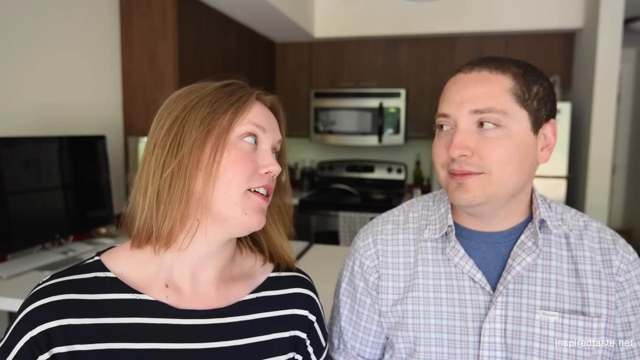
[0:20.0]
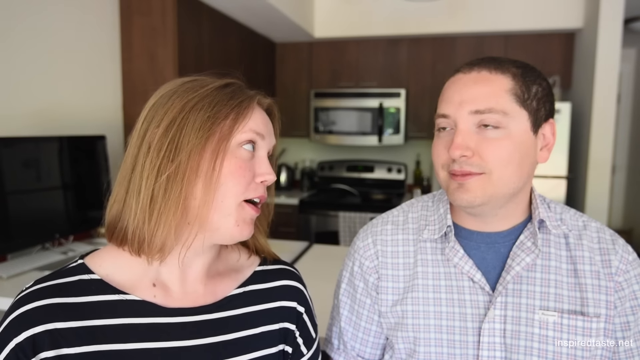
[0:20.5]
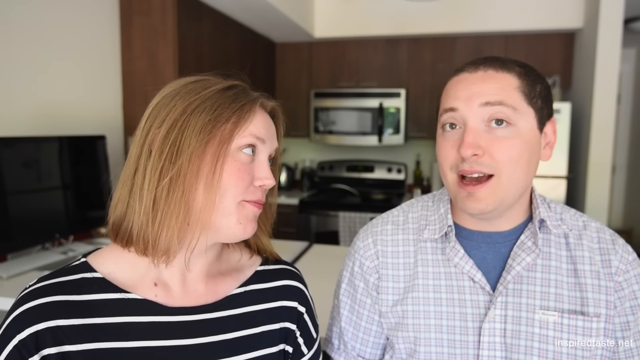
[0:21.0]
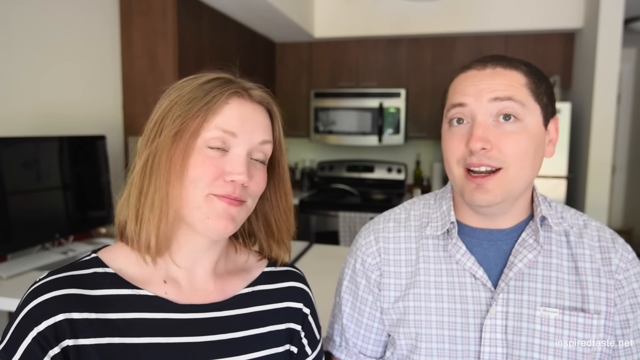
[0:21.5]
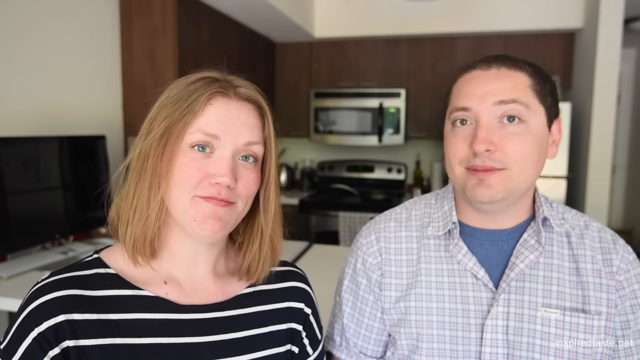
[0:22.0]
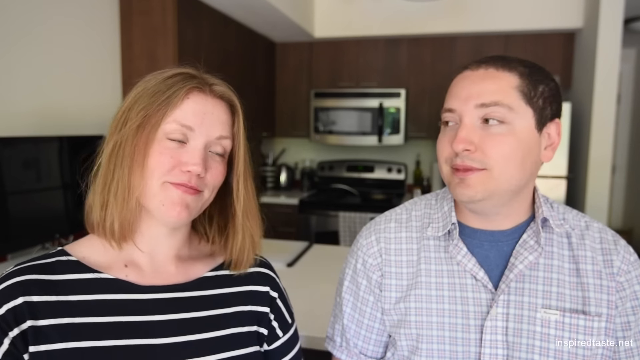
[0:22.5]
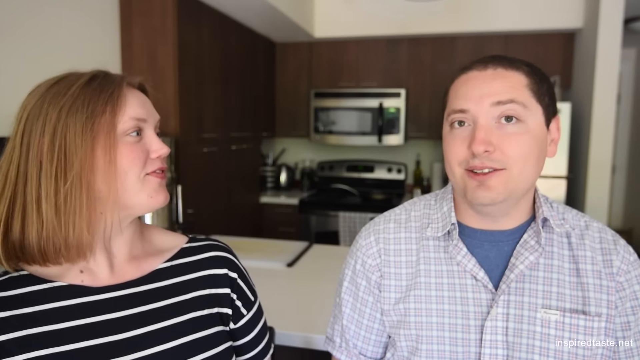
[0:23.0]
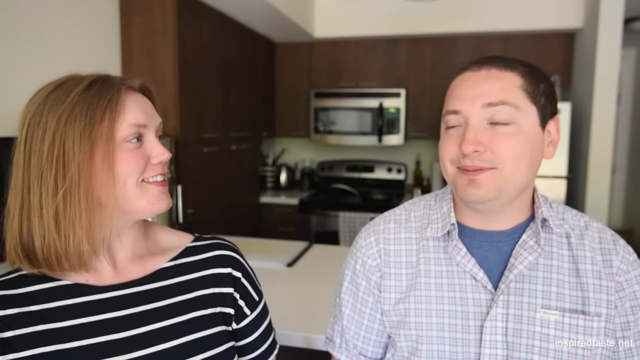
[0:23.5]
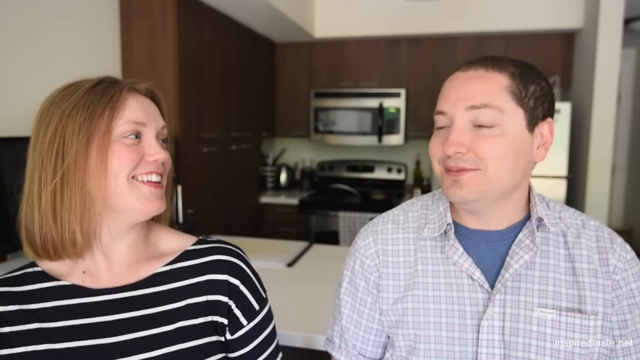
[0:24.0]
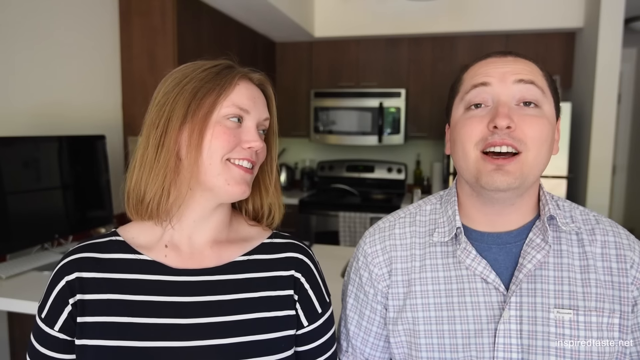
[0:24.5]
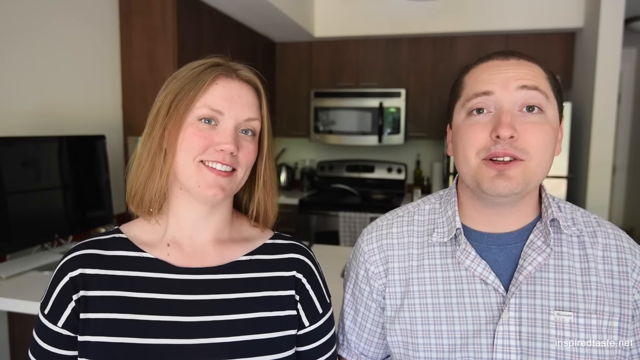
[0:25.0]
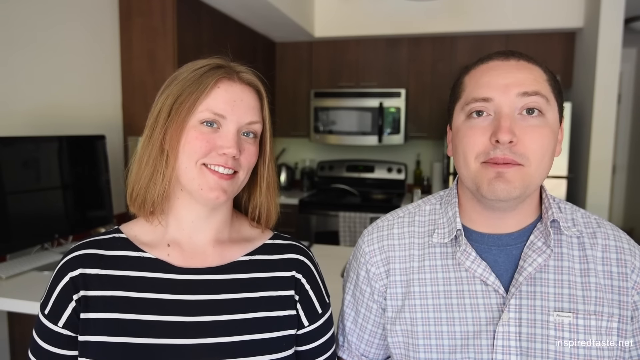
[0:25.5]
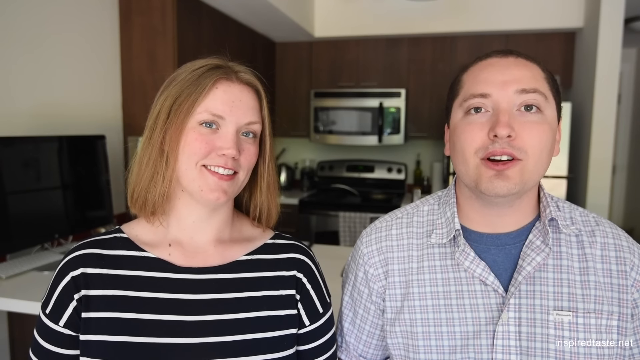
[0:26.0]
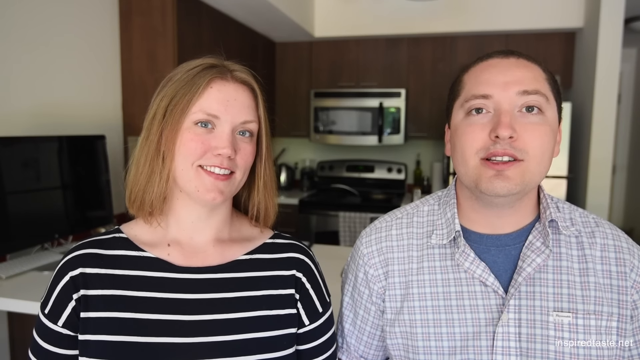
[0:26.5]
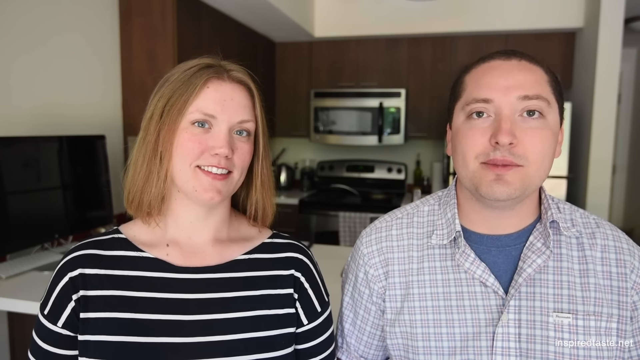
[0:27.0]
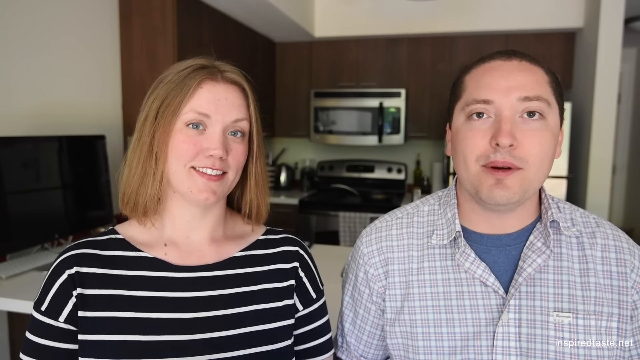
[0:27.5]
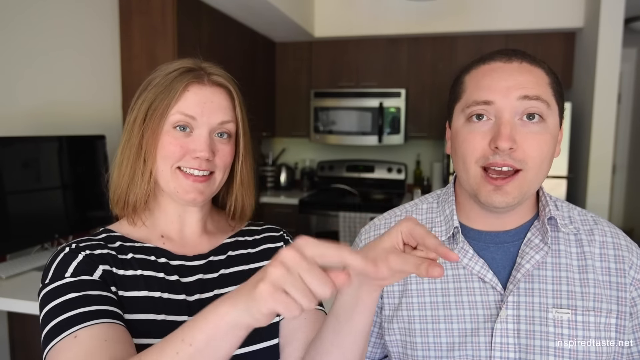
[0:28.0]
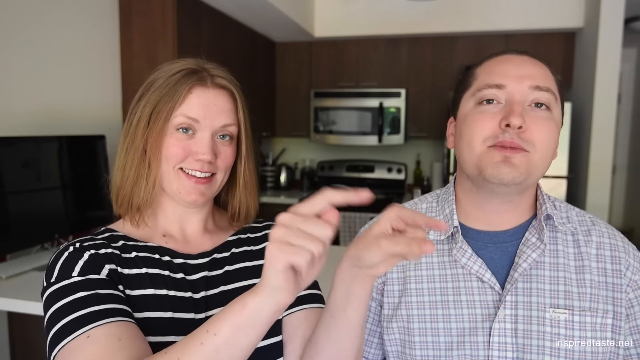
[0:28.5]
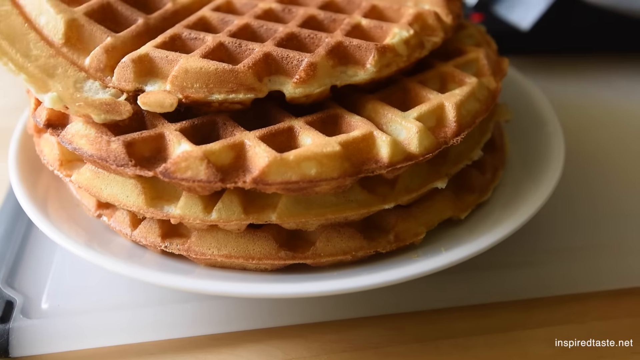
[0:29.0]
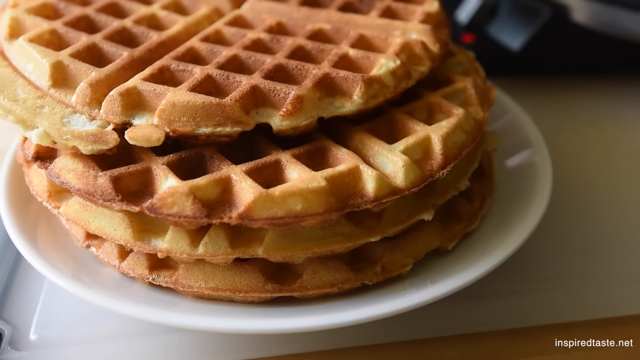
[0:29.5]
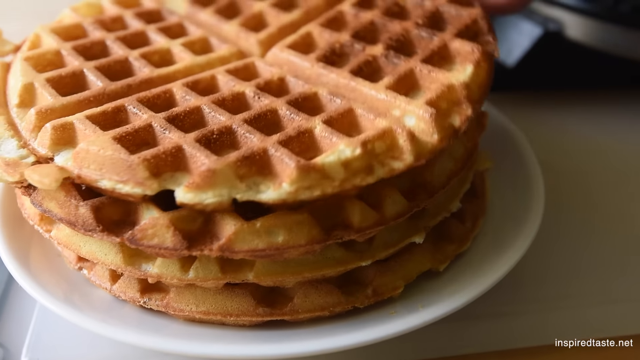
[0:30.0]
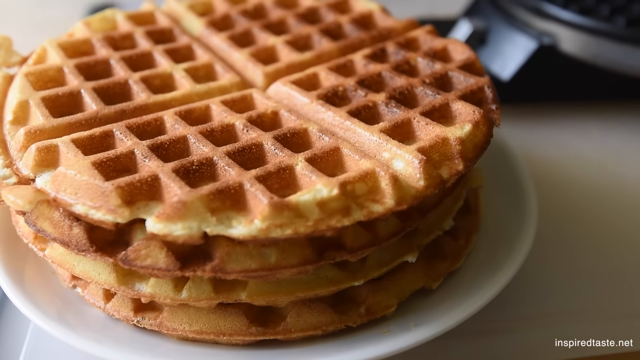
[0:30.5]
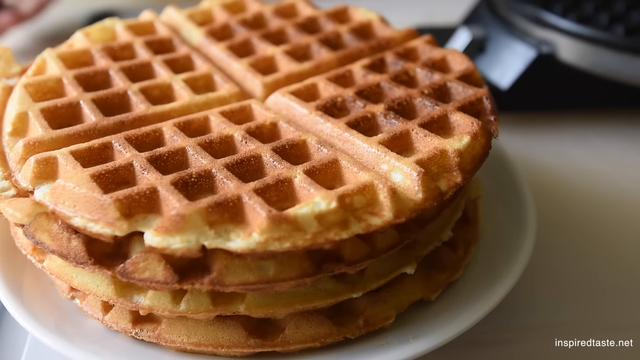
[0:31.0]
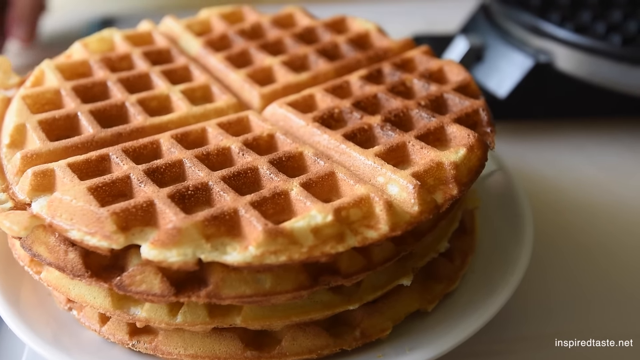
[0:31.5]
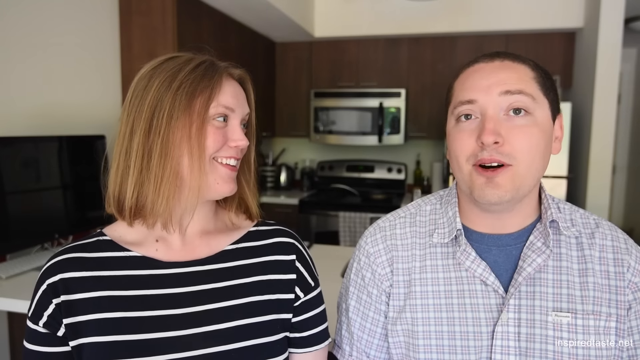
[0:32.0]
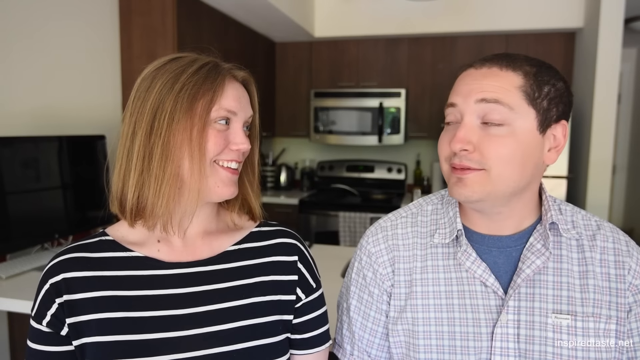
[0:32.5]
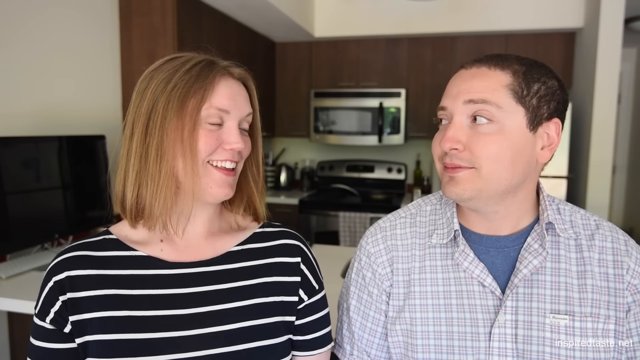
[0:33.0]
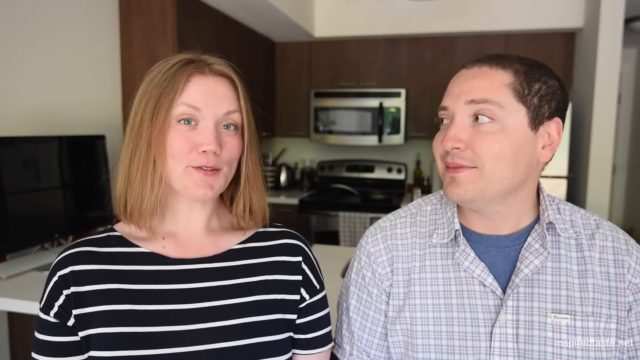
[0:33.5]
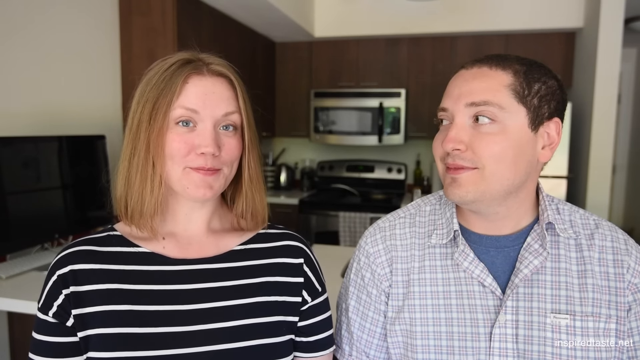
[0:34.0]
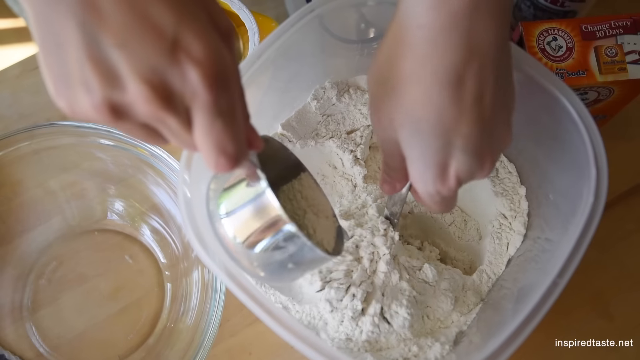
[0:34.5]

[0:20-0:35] A man and a woman speak to each other in an intro. He wears a blue t-shirt with a plaid shirt over it, and she wears a black and white striped shirt. Behind them is their kitchen, with the stove and the microwave in the background and just the edge of a waffle iron visible. After they talk a little, the video pans to a picture of a plate with four waffles on it; they are full waffles out of a press, with four quarters on each waffle. The people are then shown talking again, followed by someone using a spoon to put flour into a metal measuring cup, with a clear bowl where the flour is going to be put.